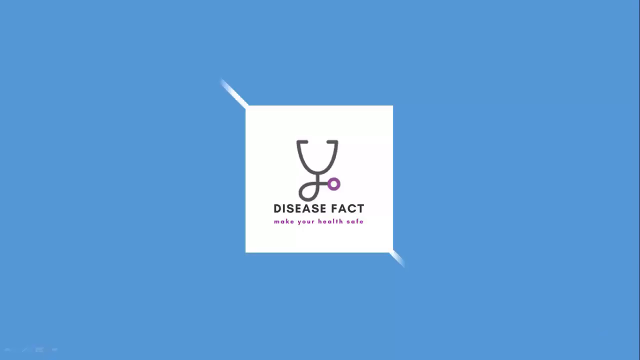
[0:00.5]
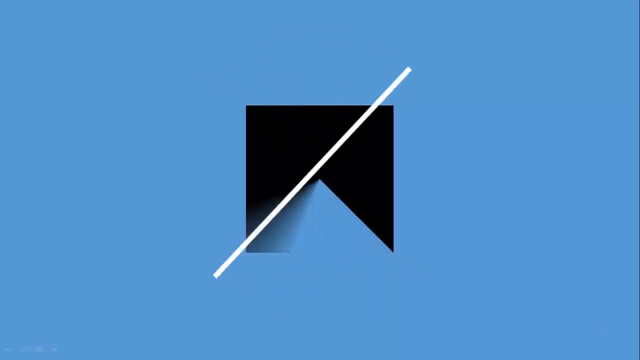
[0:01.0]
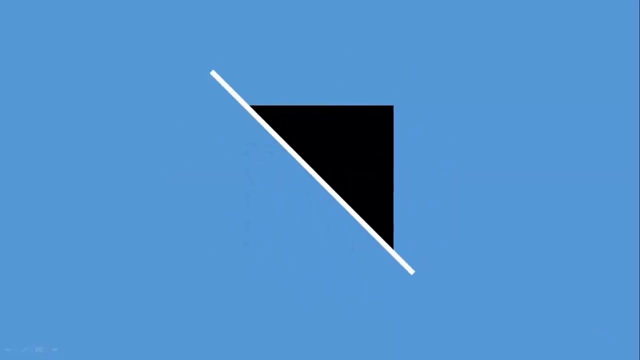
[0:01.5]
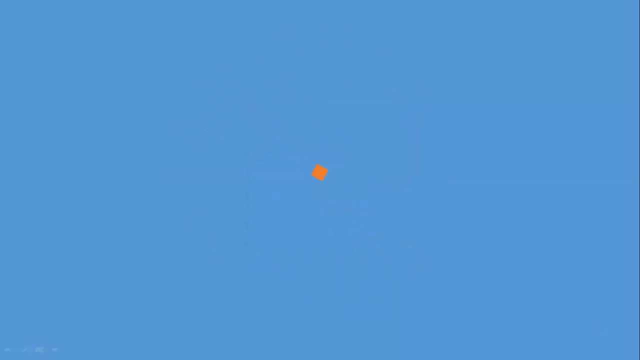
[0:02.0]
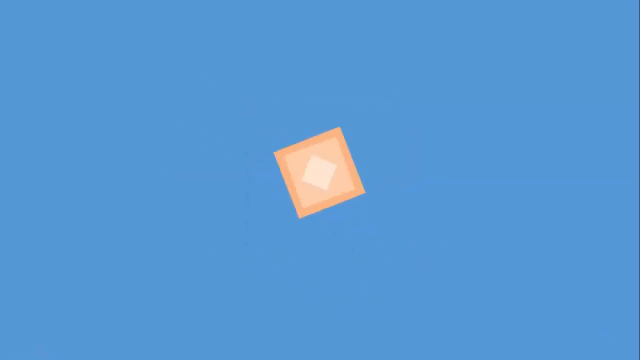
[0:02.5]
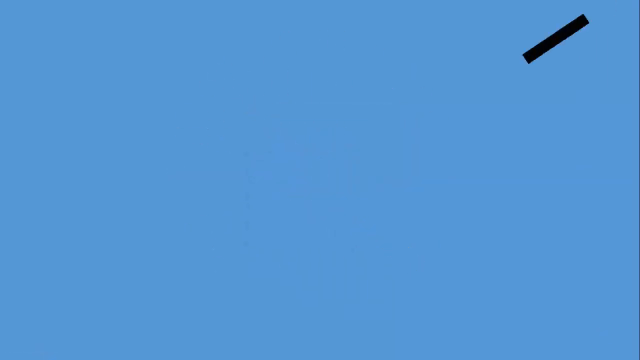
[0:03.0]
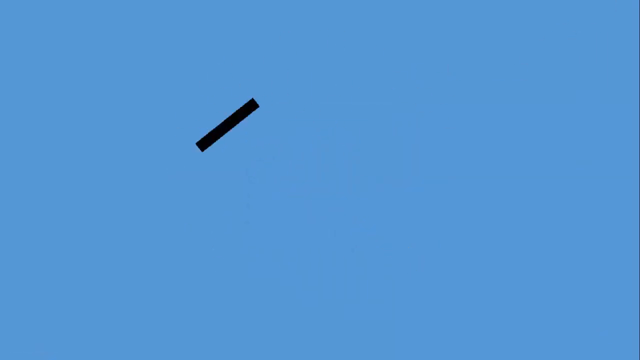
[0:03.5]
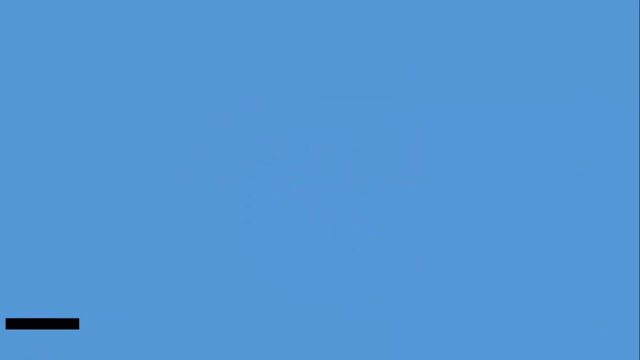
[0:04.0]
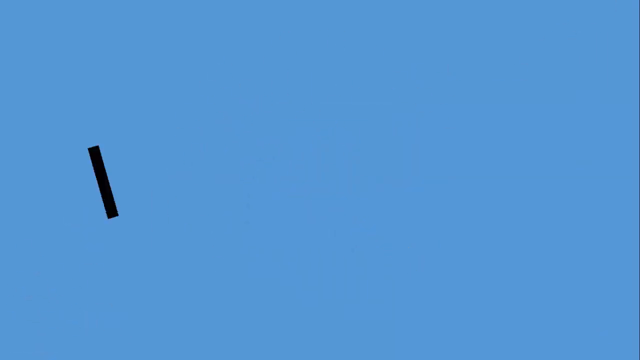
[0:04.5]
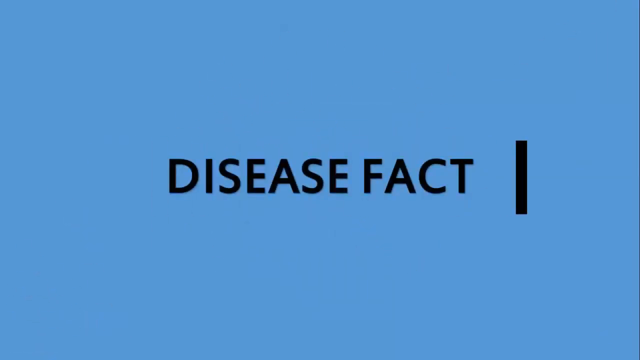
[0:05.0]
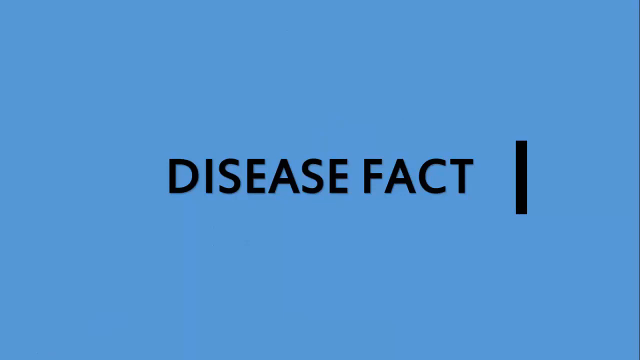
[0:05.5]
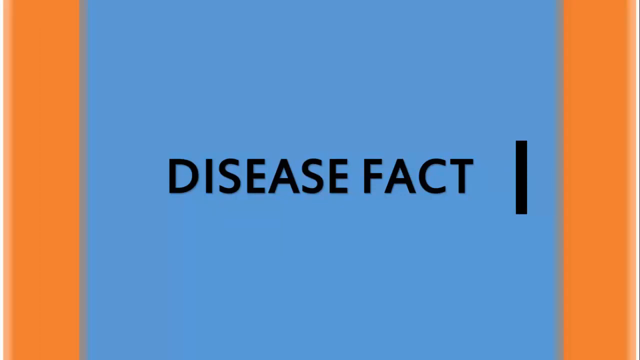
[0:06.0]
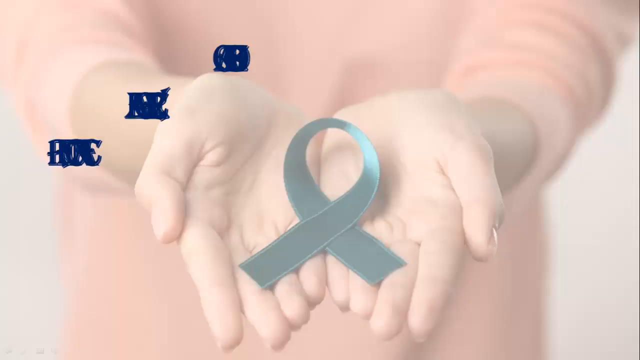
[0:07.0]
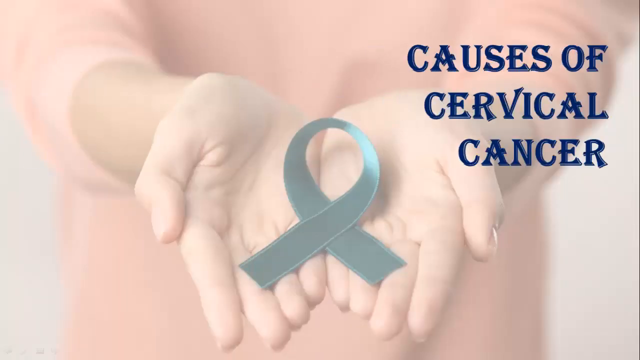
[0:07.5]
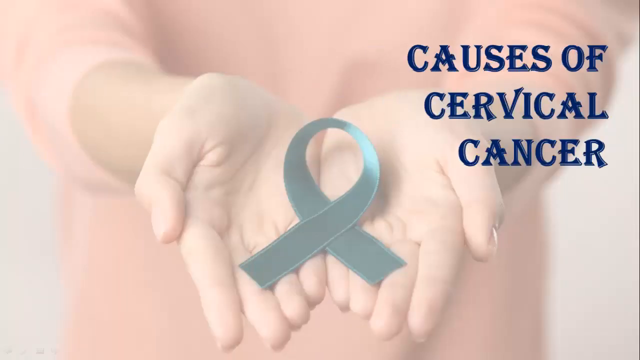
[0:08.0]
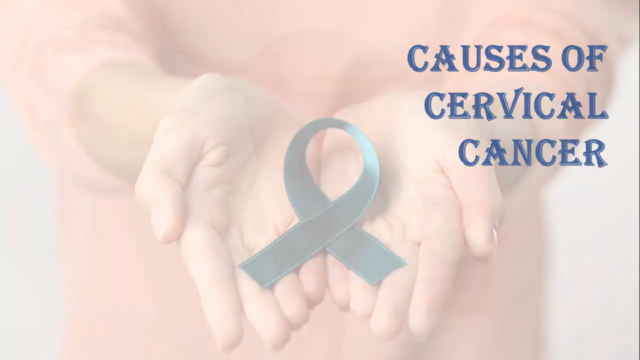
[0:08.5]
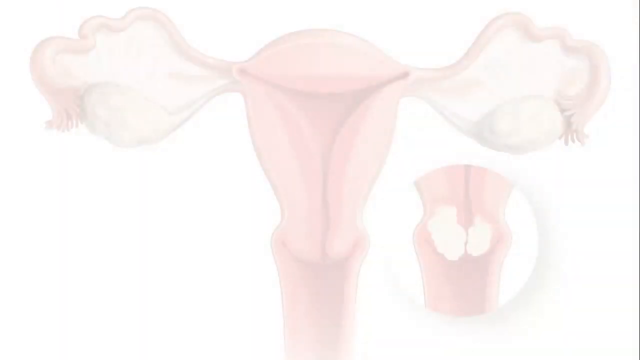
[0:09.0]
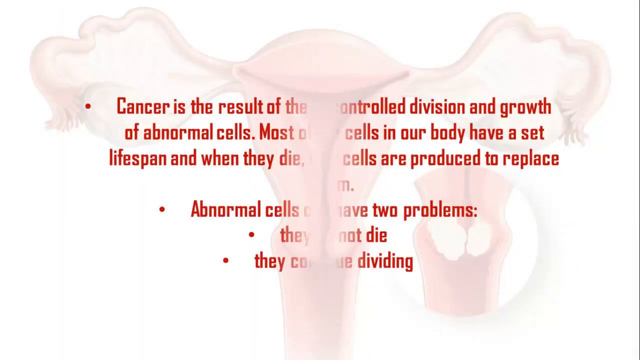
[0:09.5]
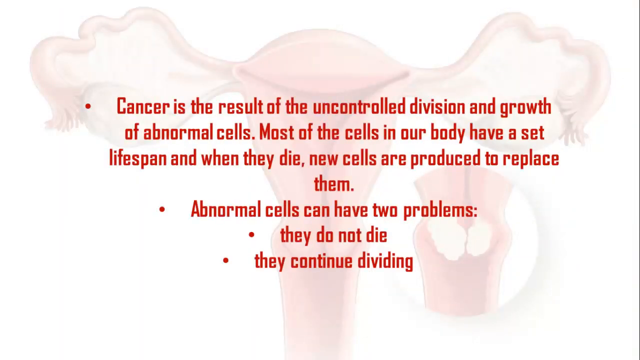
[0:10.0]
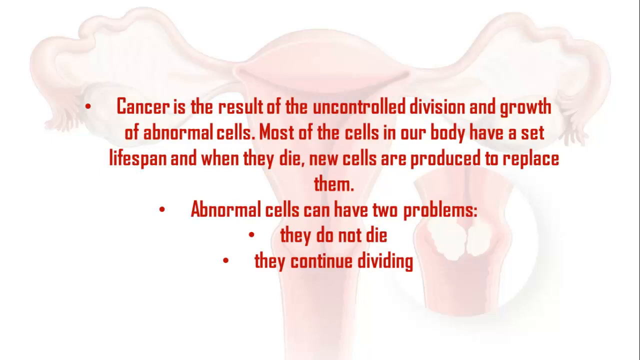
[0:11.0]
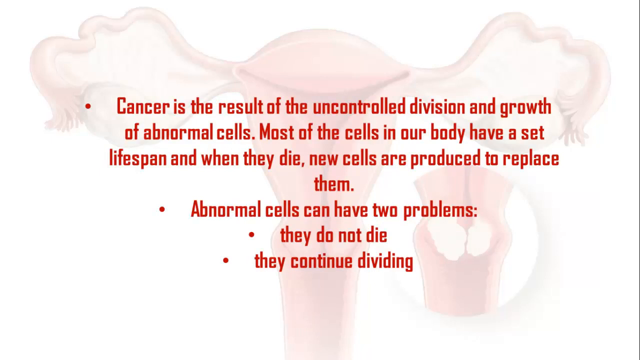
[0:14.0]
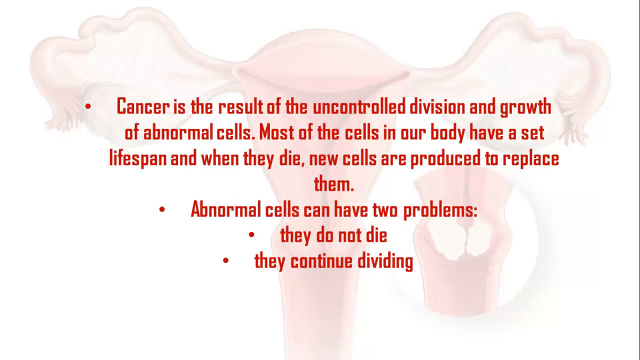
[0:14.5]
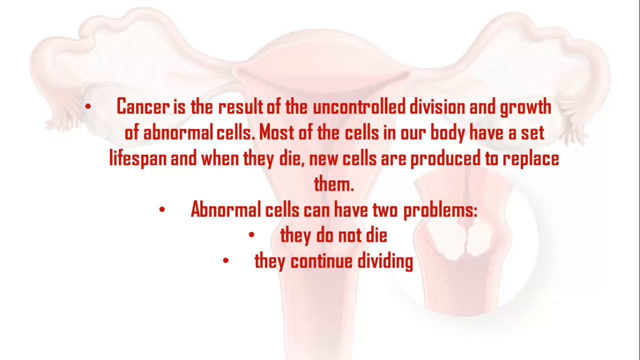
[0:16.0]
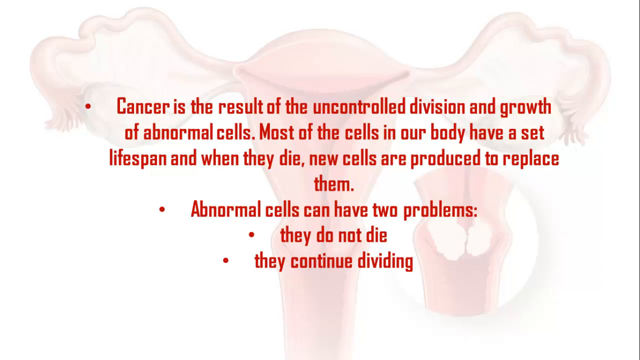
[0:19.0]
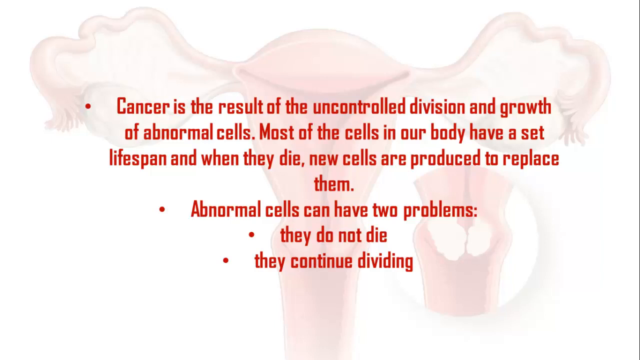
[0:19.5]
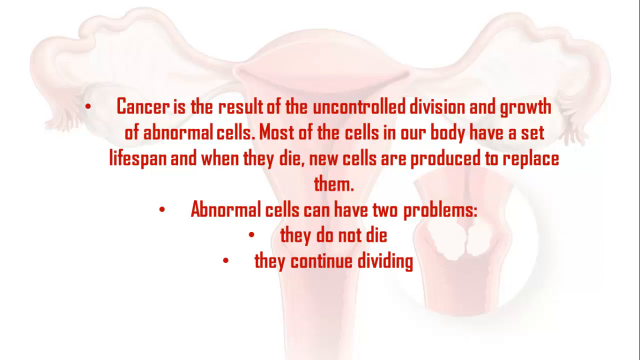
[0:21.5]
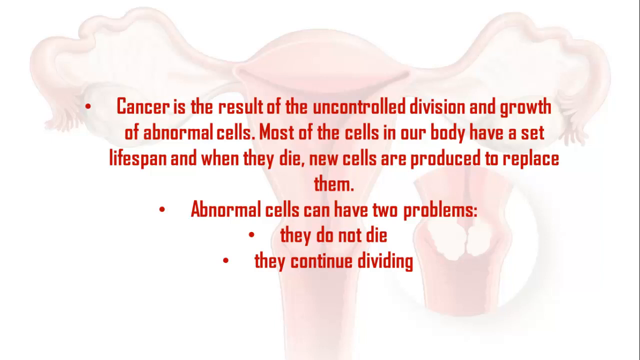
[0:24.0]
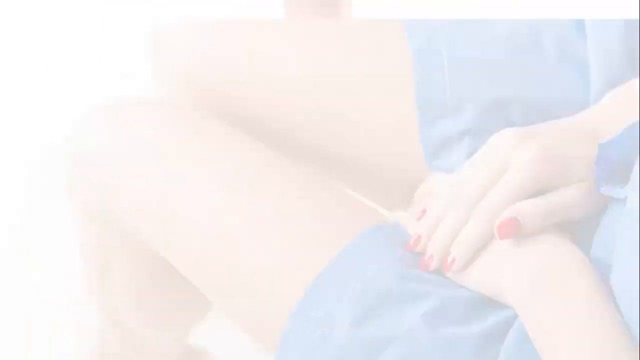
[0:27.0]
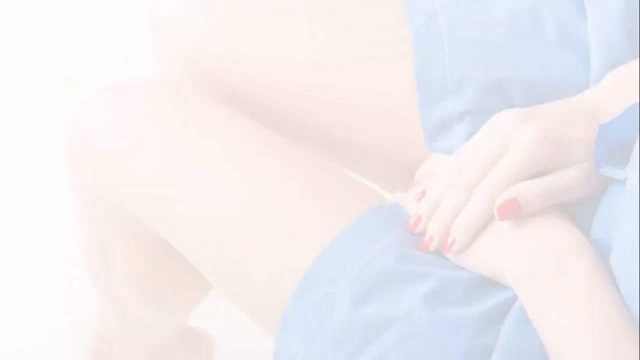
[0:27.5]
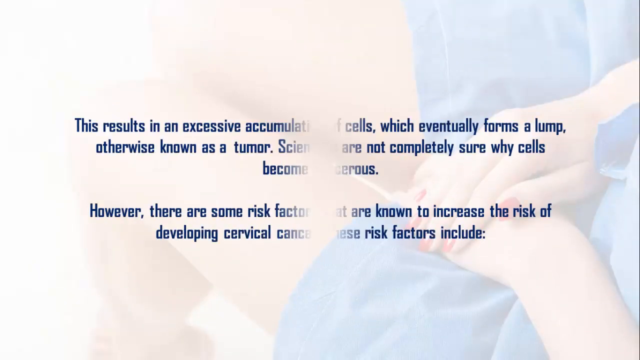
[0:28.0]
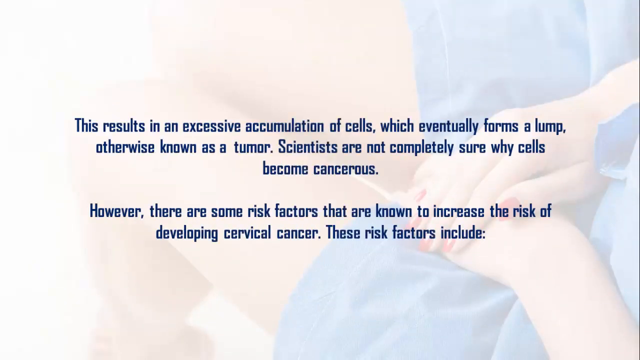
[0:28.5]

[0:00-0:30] A blue background appears with a square in the middle and a white line; as the line turns, it erases what is in the middle, which goes by too fast to read. That disappears, a screen with a black line follows, and then the text "Disease Fact" comes up. Next, a person holds out their hands, and in them is a turquoise ribbon for cervical cancer; the image is a little blurry, or grayed out, and dark blue text in the top right corner says "Causes of Cervical Cancer." The video then moves to an image of a woman's cervix, which almost looks like the skulls of animals that have horns. Red text on it says: "Cancer is the result of the uncontrolled division and growth of abnormal cells. Most of the cells in our body have a set lifespan, and when they die, new cells are produced to replace them. Abnormal cells can have two problems. They do not die, they continue dividing."